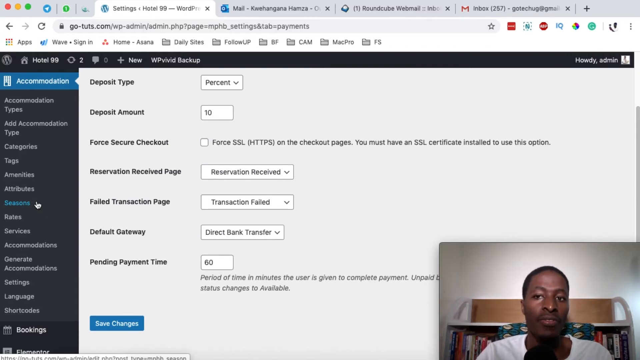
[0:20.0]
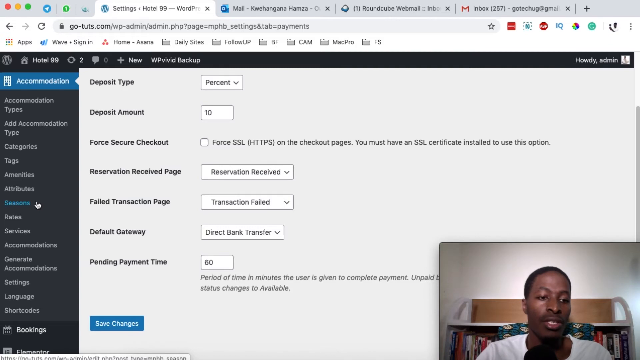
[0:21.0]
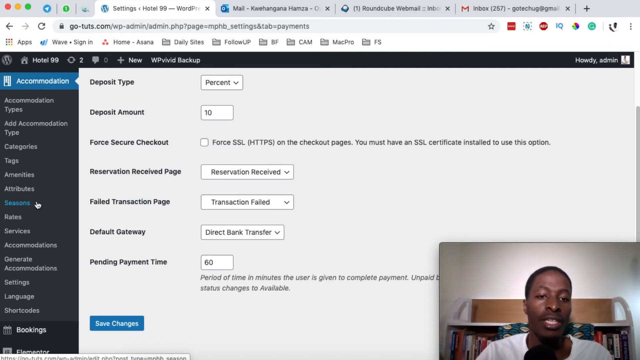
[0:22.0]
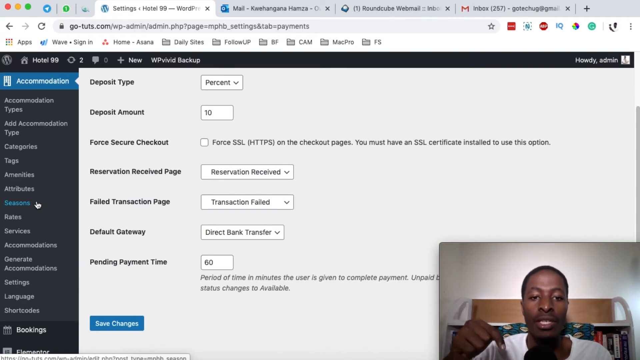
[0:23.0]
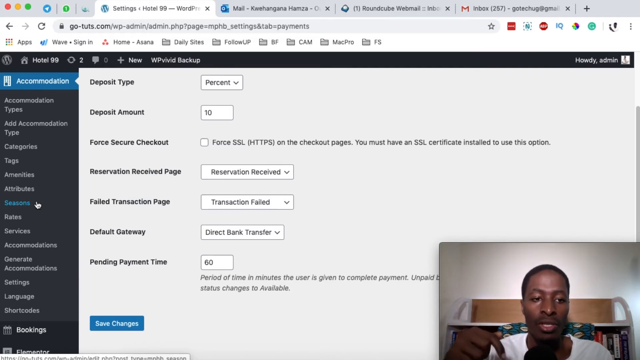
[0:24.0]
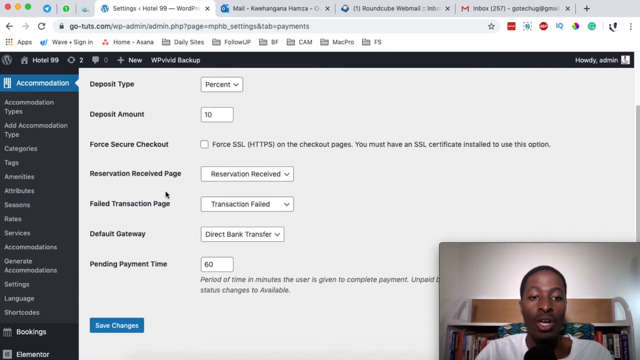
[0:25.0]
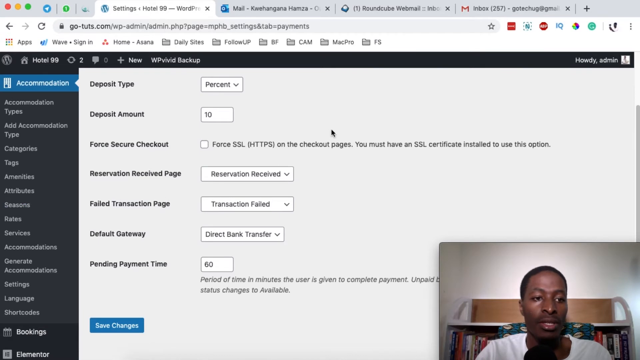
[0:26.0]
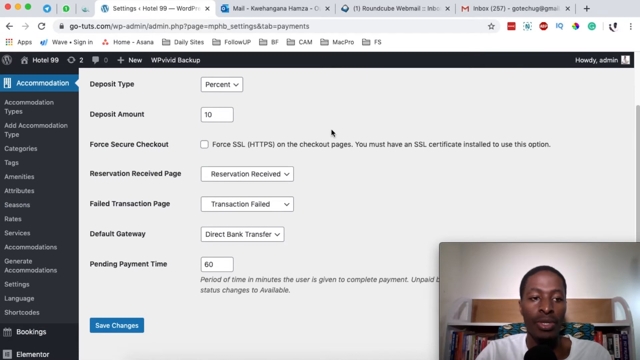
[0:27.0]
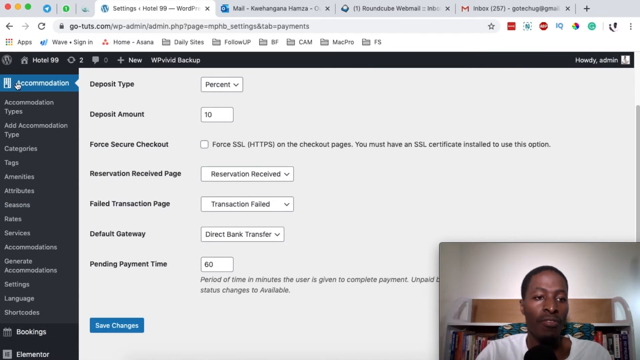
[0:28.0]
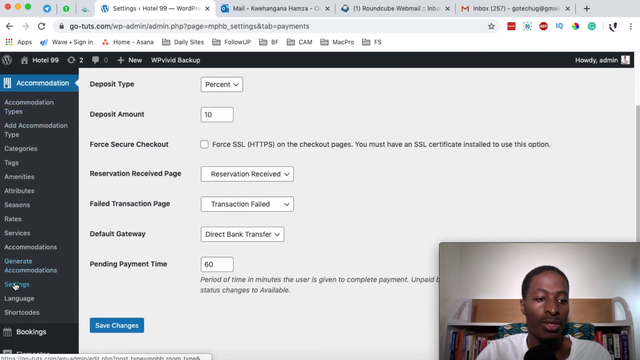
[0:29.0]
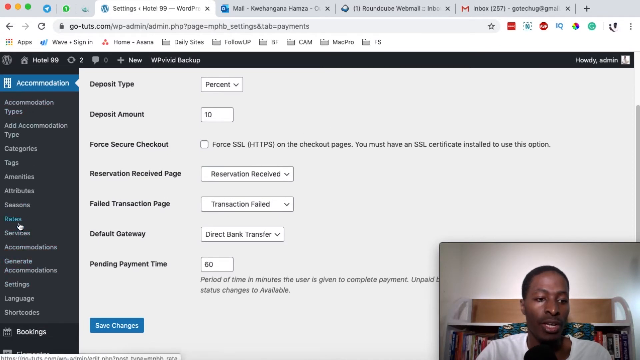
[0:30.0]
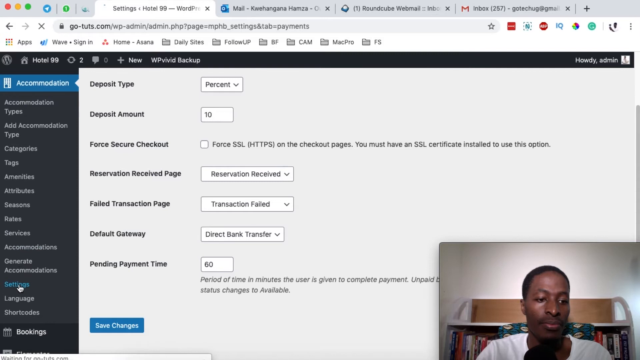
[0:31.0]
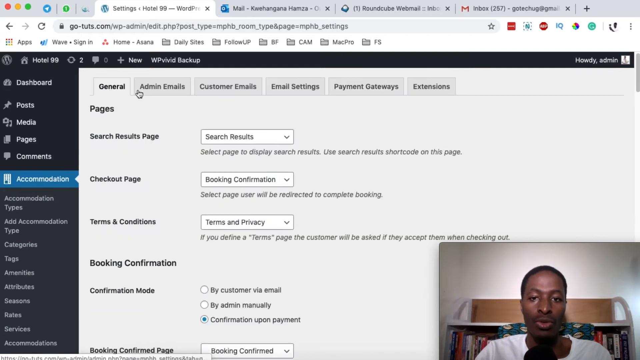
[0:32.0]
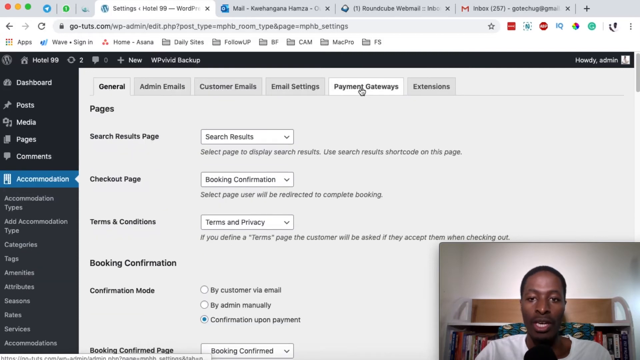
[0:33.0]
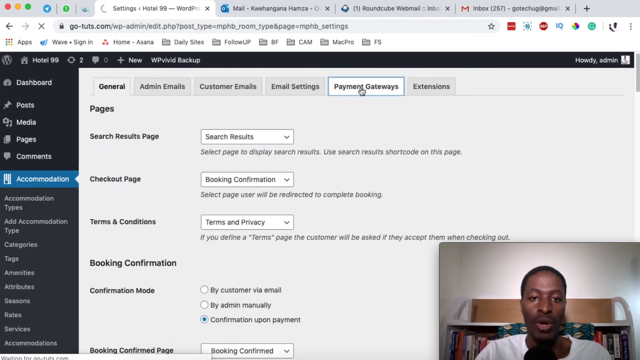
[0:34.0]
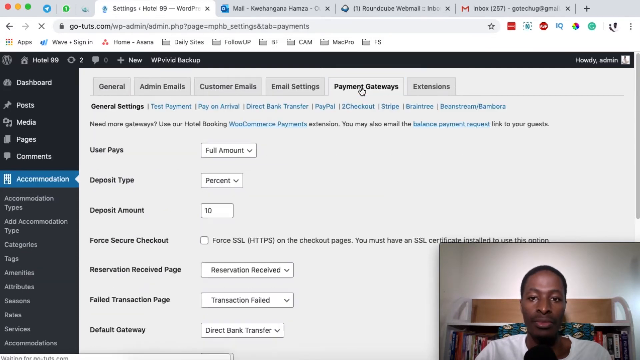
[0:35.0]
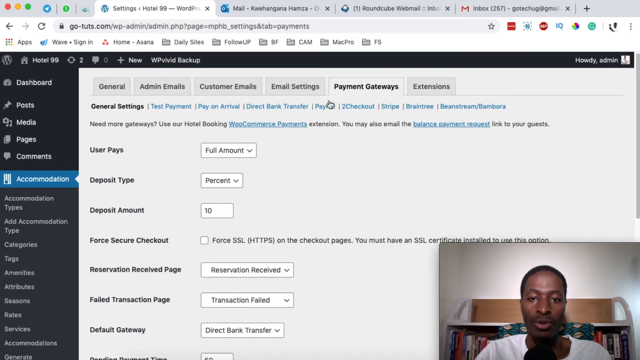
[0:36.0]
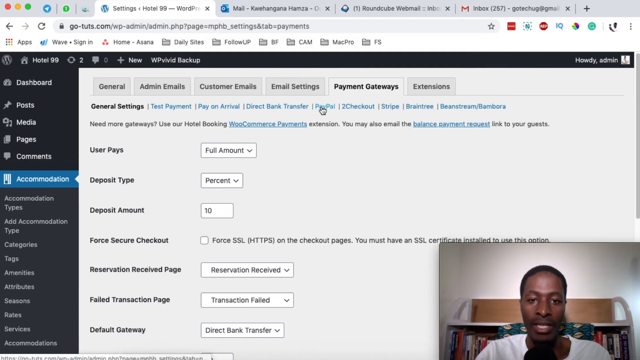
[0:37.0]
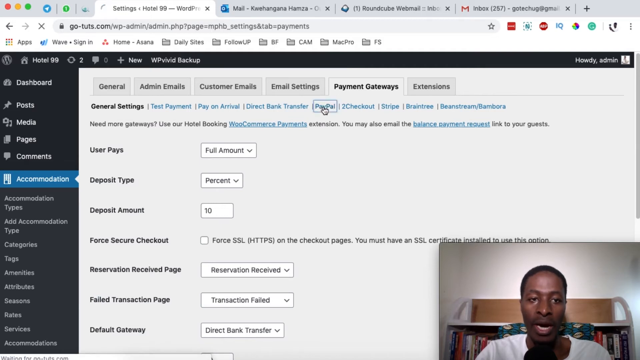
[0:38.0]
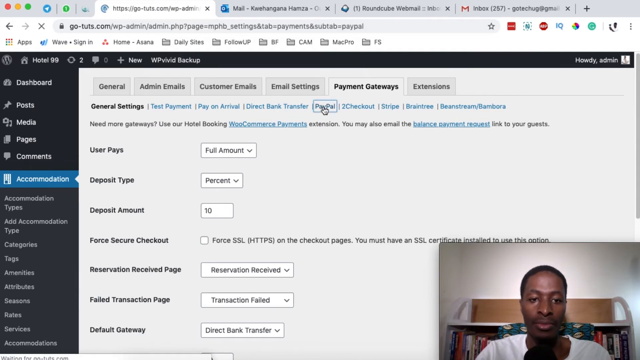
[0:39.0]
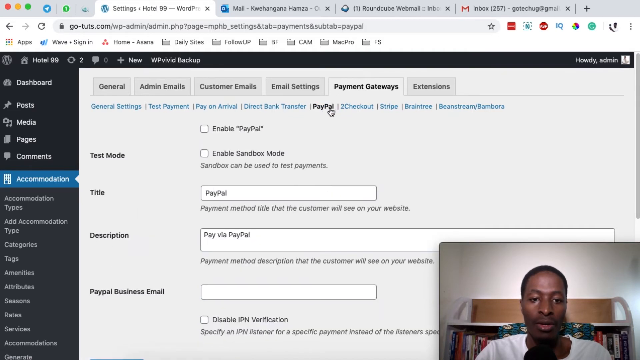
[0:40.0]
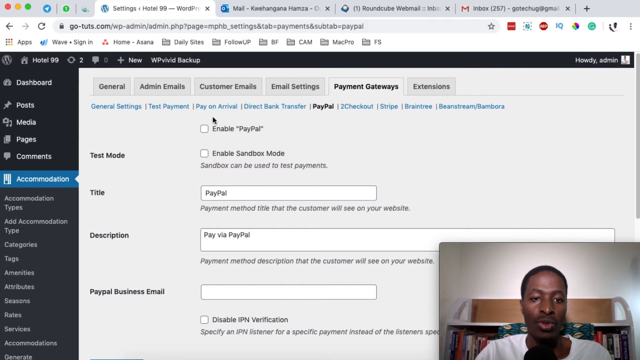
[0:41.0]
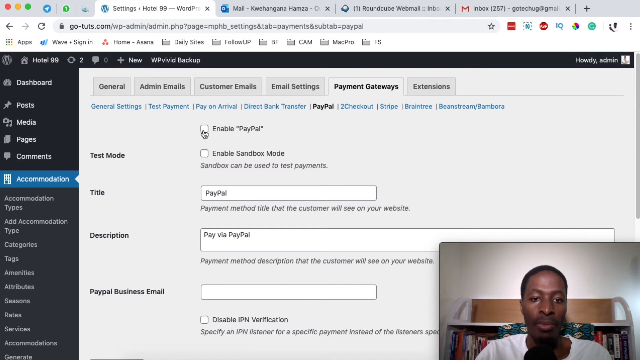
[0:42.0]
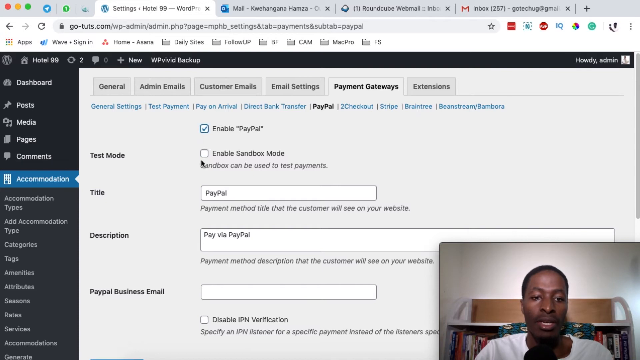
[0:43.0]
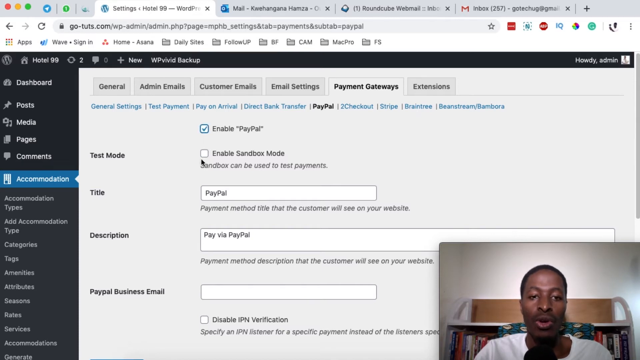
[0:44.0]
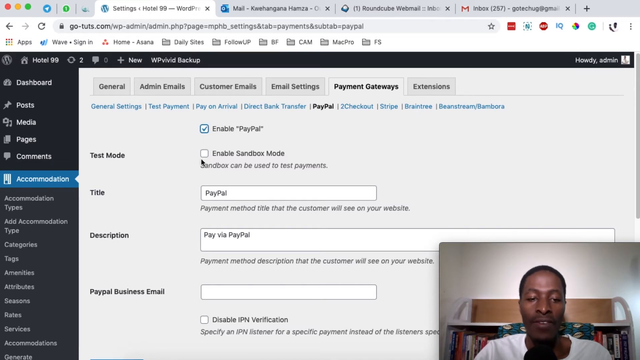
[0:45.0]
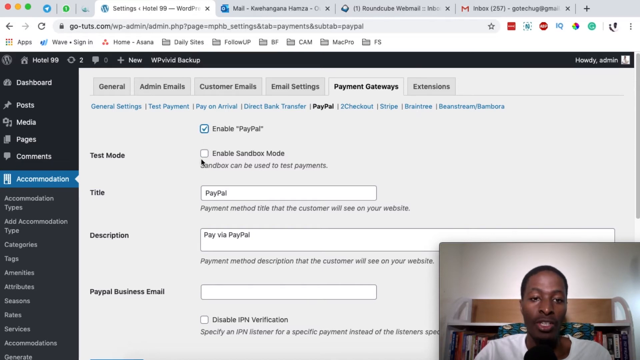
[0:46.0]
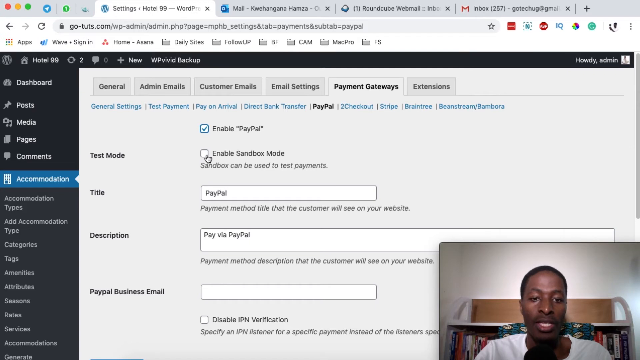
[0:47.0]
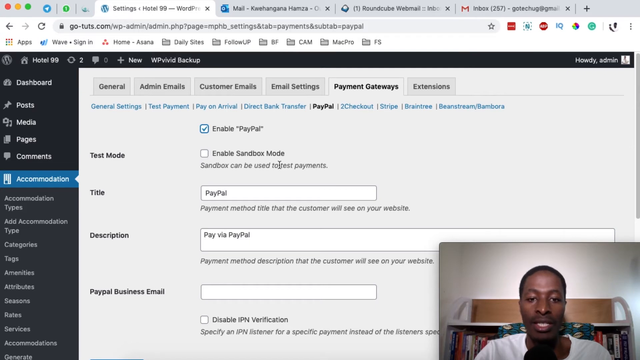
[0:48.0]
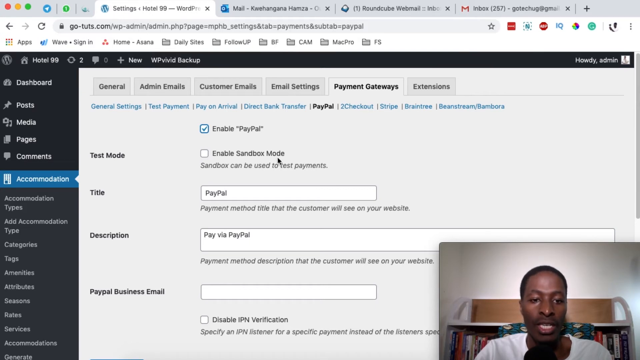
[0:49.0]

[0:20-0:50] A WordPress website is open in a web browser, with a person shown in a picture-in-picture view in the lower right corner of the screen. The mouse pointer moves around the website, over the menu dashboard area on the left side, then across the tabs along the top of the screen, and the PayPal tab under payment gateways is selected. The first option, Enable PayPal, is then selected. Four tabs are open in the browser; two of them appear to be mail tabs. Another mail tab shows one message, and one tab shows "Webmail" with a Gmail icon and 257 unread emails.